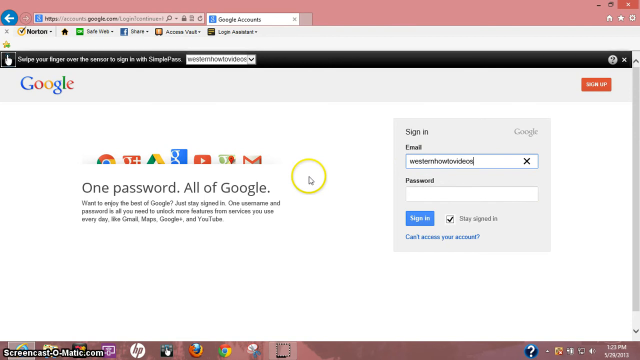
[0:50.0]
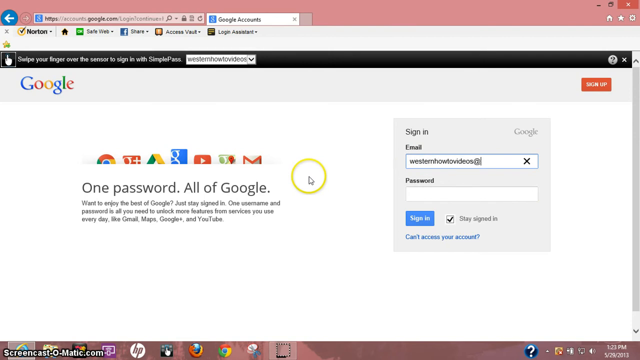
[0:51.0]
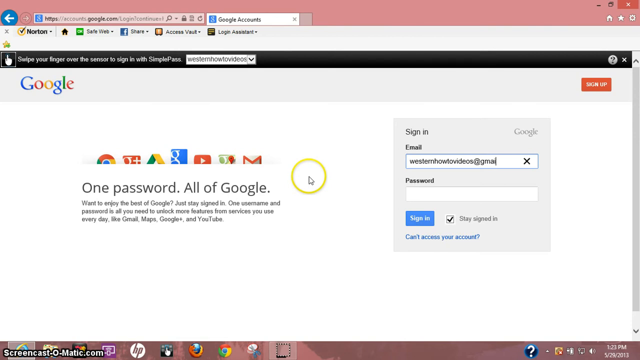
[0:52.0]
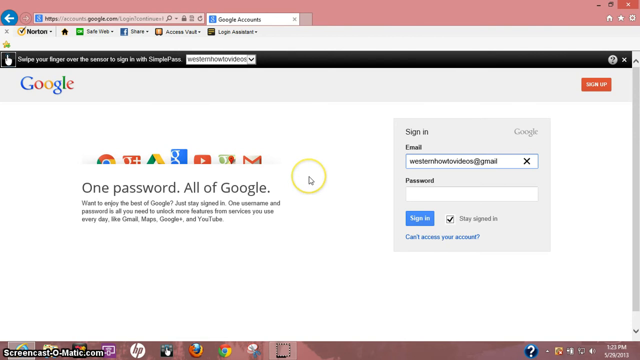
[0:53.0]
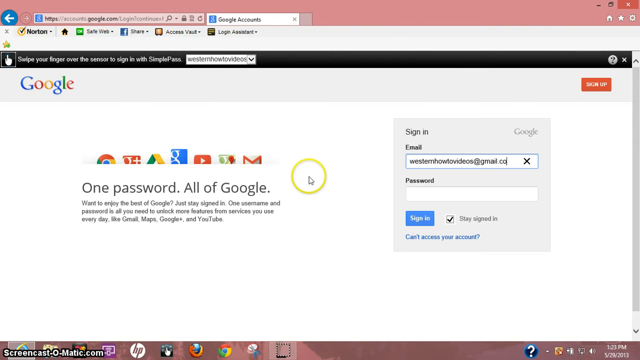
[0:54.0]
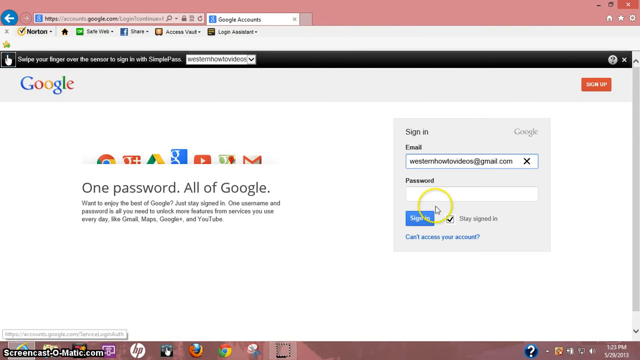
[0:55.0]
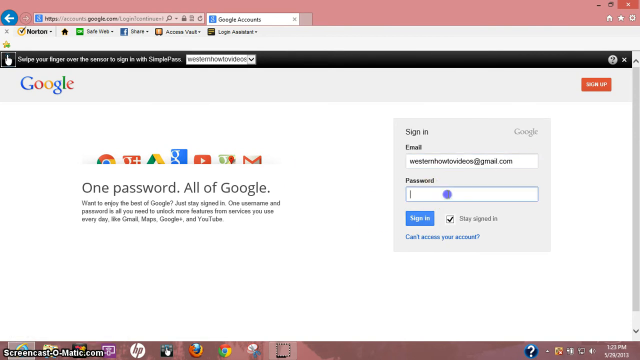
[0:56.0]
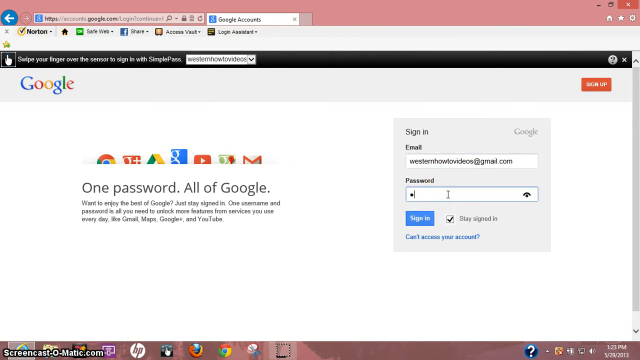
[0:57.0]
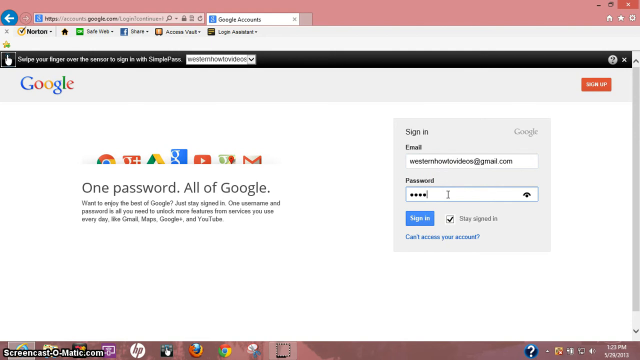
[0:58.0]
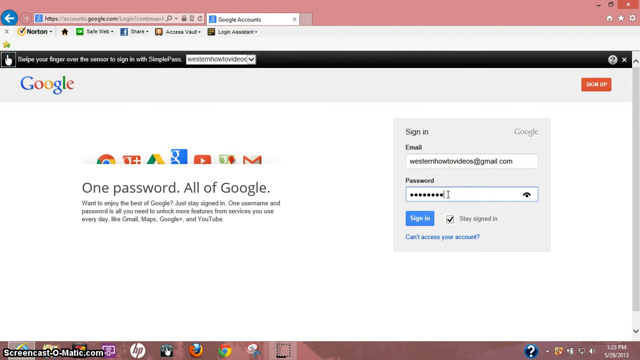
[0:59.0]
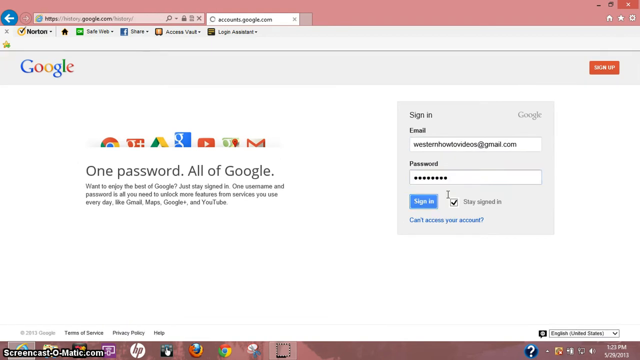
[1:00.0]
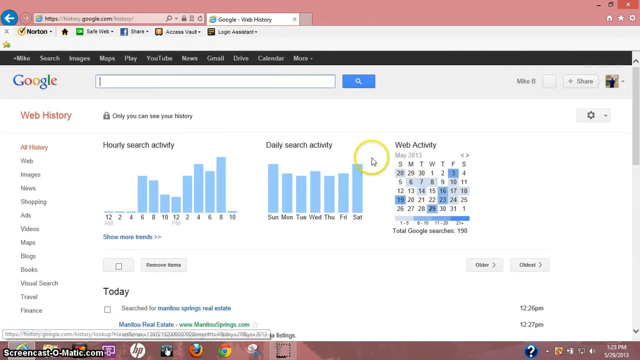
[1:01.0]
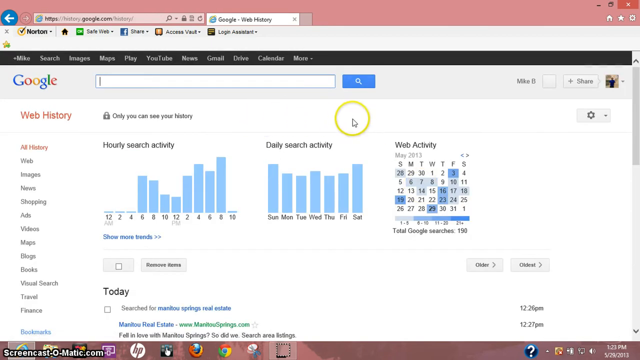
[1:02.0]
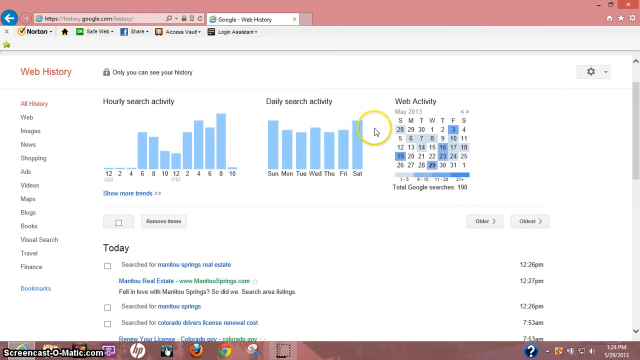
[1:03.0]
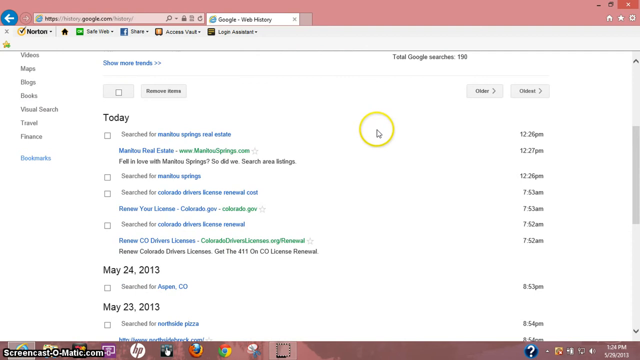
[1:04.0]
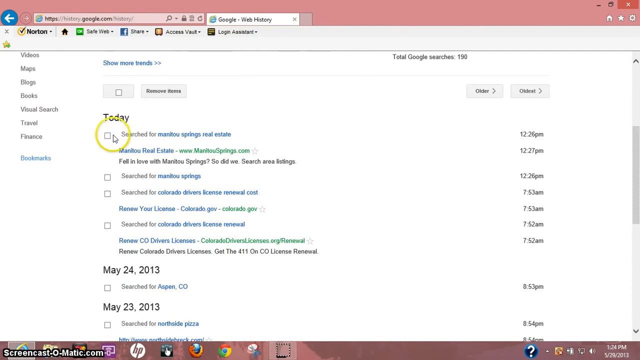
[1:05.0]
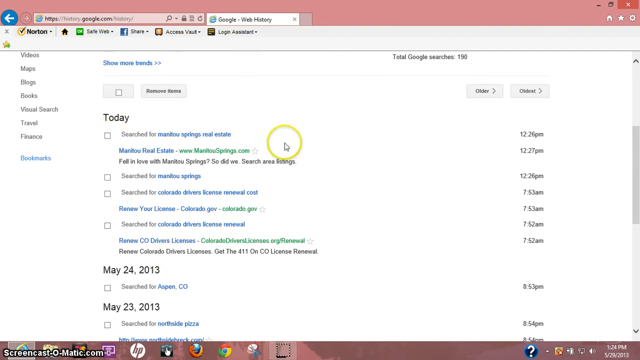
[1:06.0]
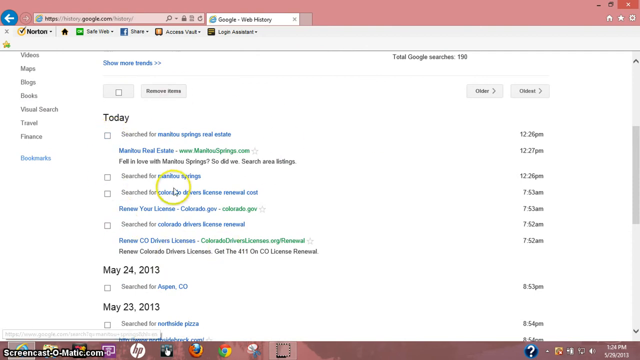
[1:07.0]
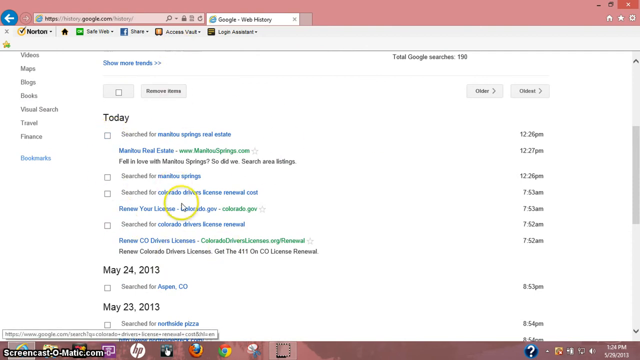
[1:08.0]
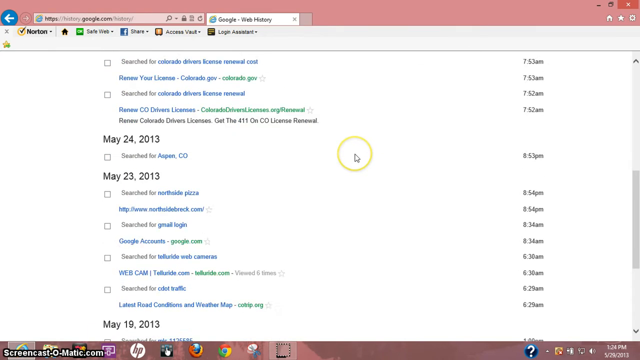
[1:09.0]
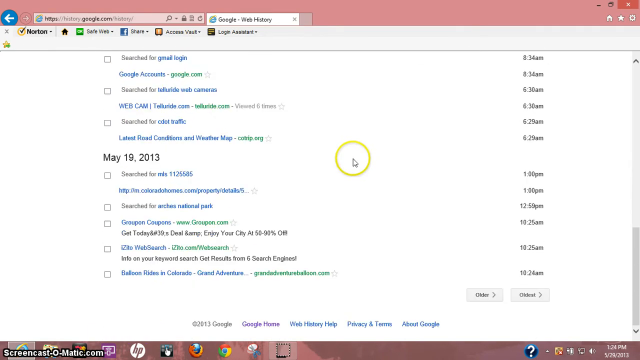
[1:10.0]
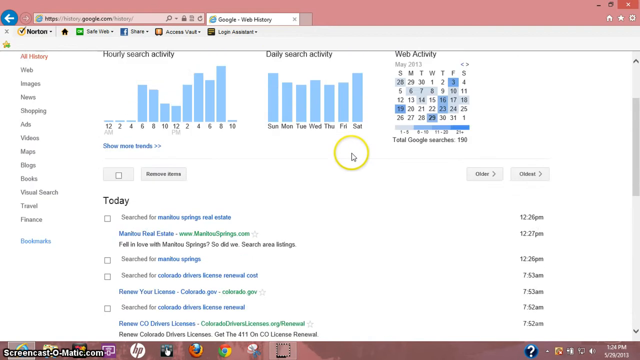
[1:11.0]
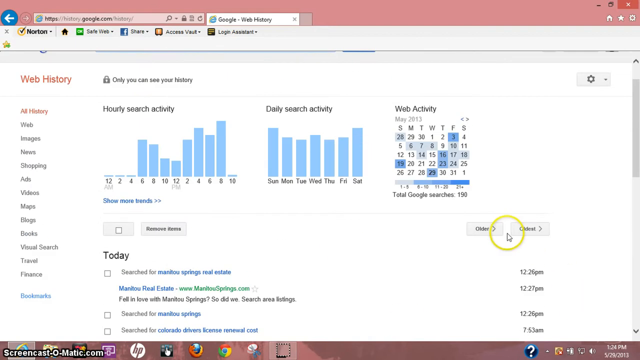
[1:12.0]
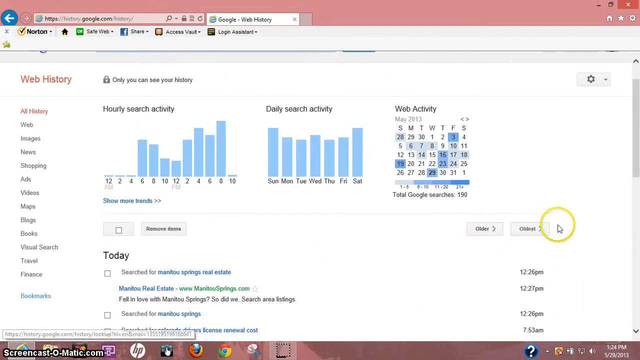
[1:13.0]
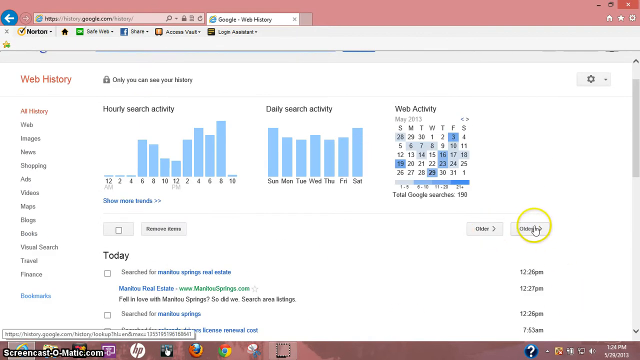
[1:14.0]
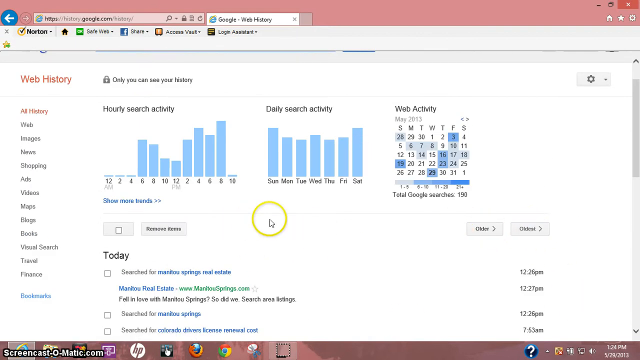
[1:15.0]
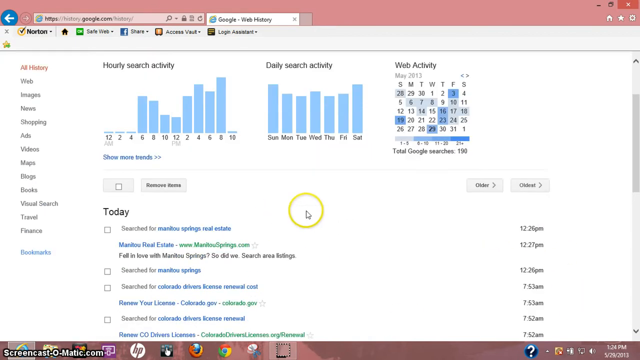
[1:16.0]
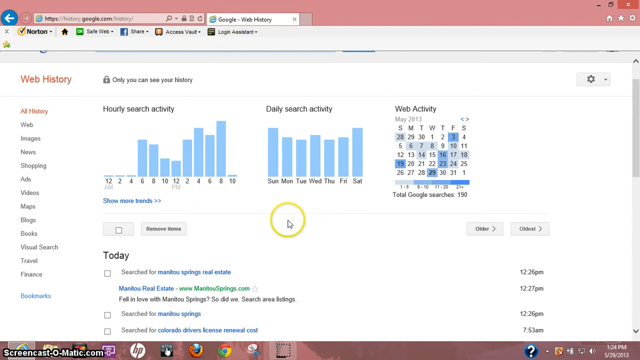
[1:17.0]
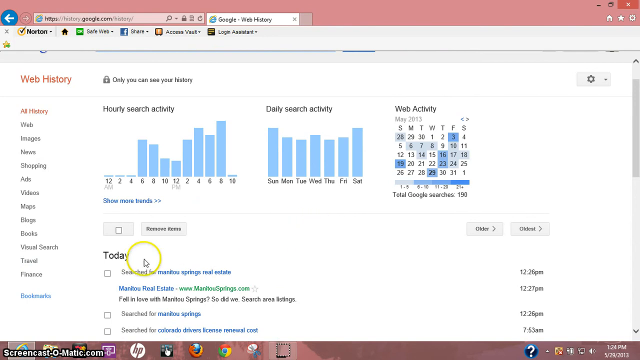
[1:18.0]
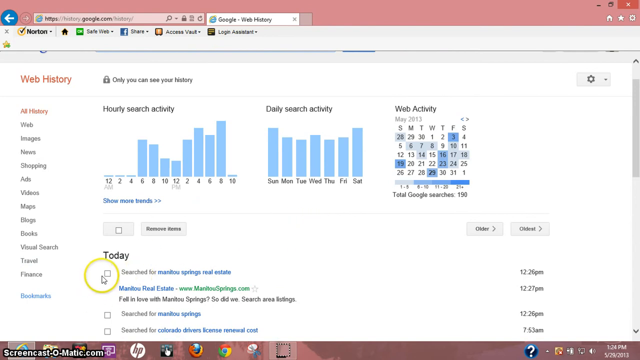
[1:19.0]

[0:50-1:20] The website, google.com history, shows "one password all of Google" in black font in the center of the screen, with some Google applications above it. Beneath it, text includes "one username and password is all you need to unlock more features from services you use every day like Gmail Maps Google Plus and YouTube". On the right is a sign-in section with an email field, a password field, a blue sign in button underneath, and a small checkbox option that is checked. The email field reads "Western how to videos", with the mouse cursor inside it. The typing continues as someone adds "at gmail.com", making it "Western how to videos at gmail.com". The mouse cursor, which has a yellow circle around it, goes to the password field and clicks it, and the person types a password shown as black circles. The page then changes to what looks like a web history page showing an hourly search activity graph, a daily search activity graph, and a web activity calendar. The cursor scrolls down the page through different sections, reaches a section labeled "today", scrolls down further, scrolls back up, hovers over a button that says "older", then scrolls up and down again while moving all over the place.